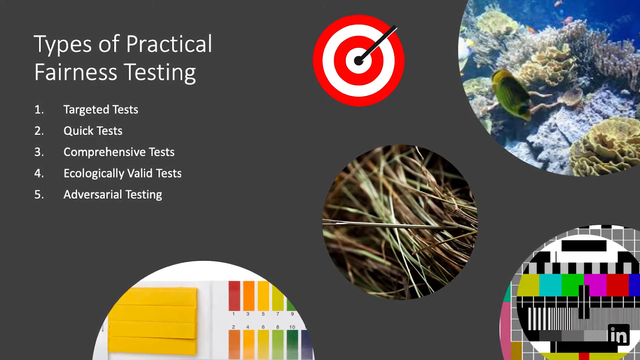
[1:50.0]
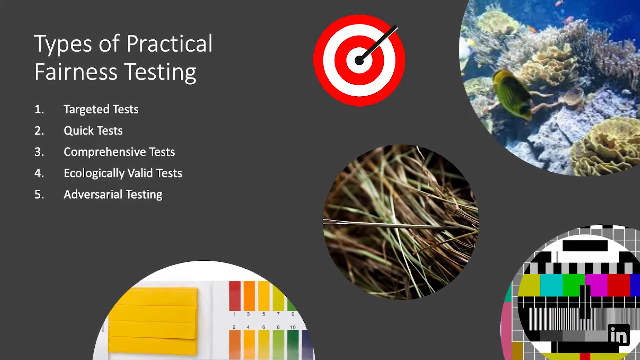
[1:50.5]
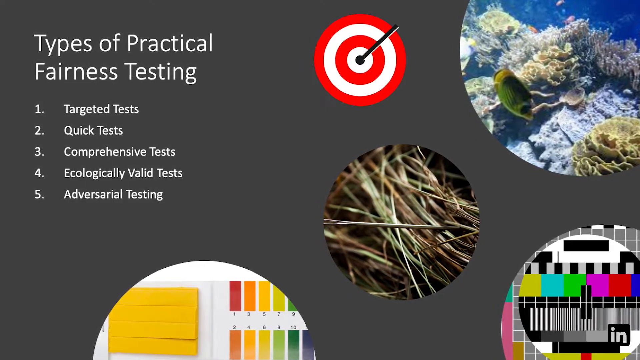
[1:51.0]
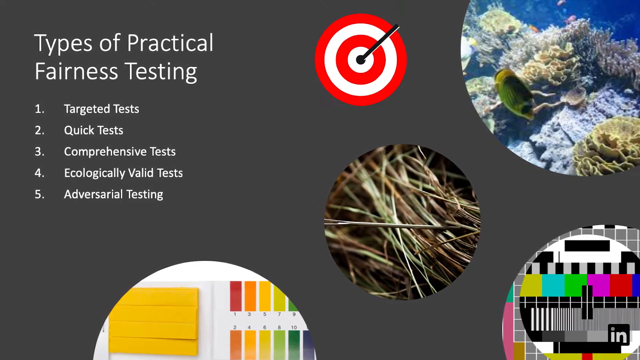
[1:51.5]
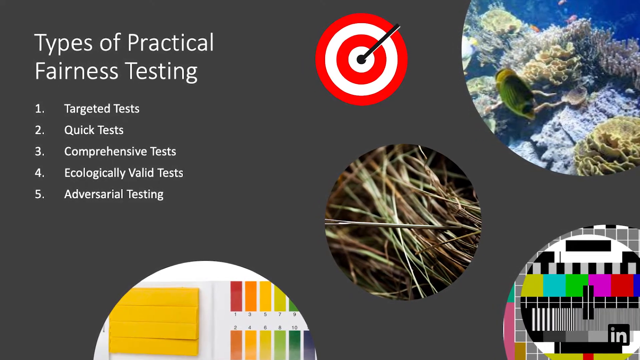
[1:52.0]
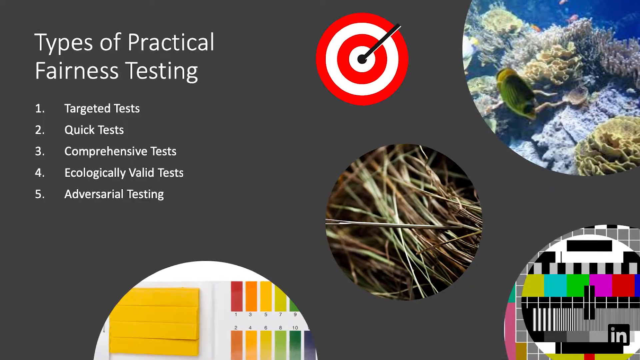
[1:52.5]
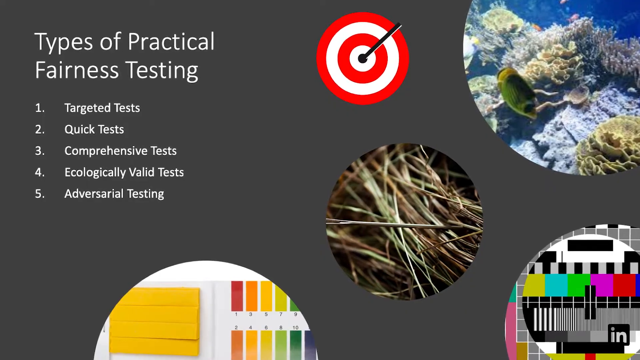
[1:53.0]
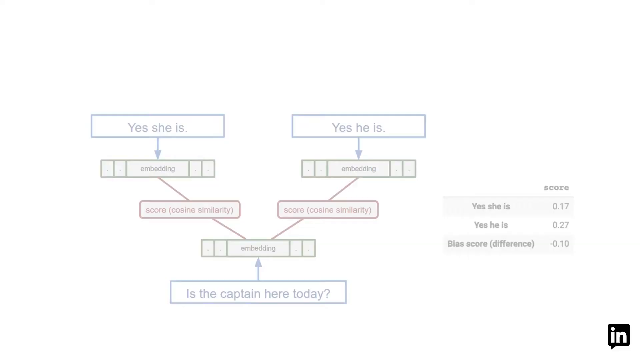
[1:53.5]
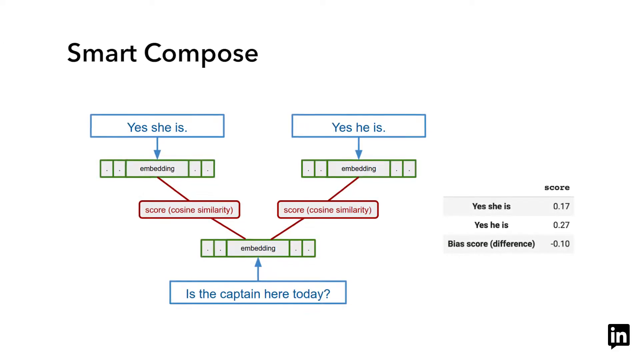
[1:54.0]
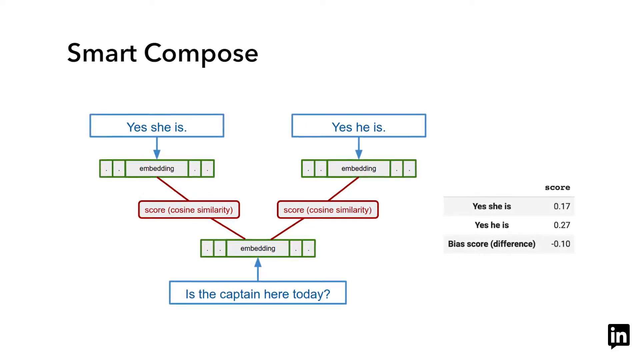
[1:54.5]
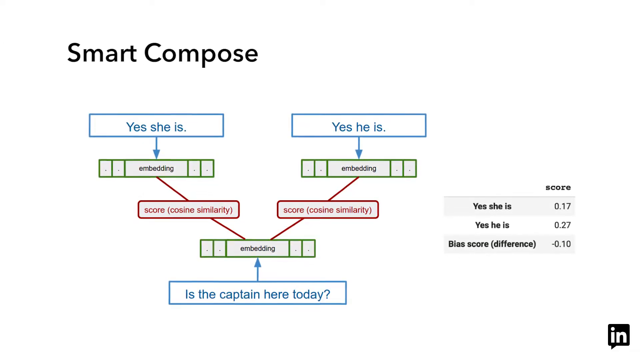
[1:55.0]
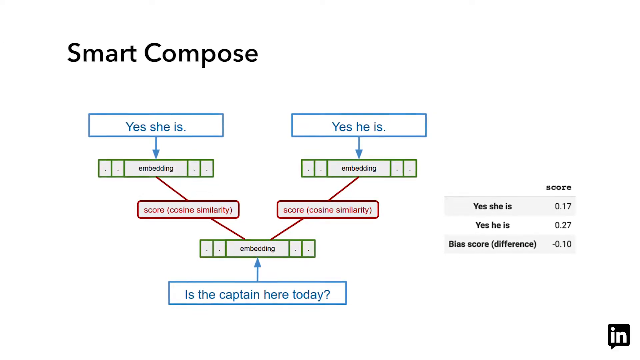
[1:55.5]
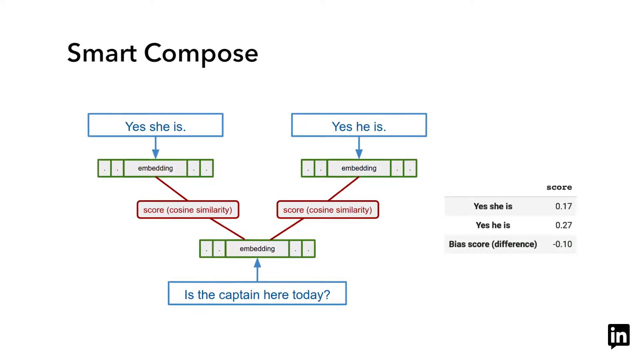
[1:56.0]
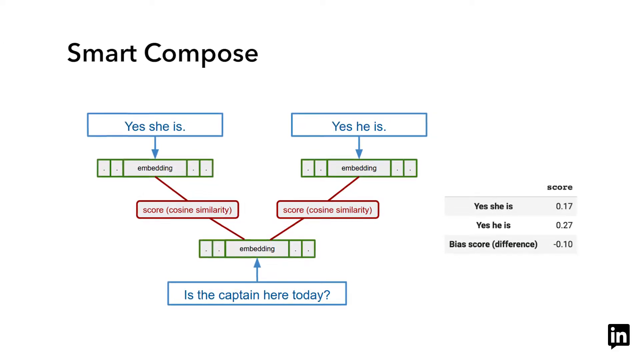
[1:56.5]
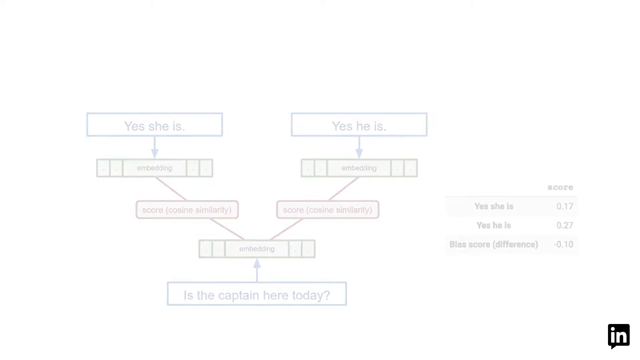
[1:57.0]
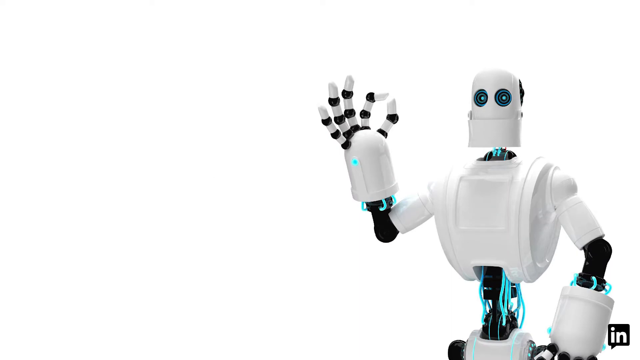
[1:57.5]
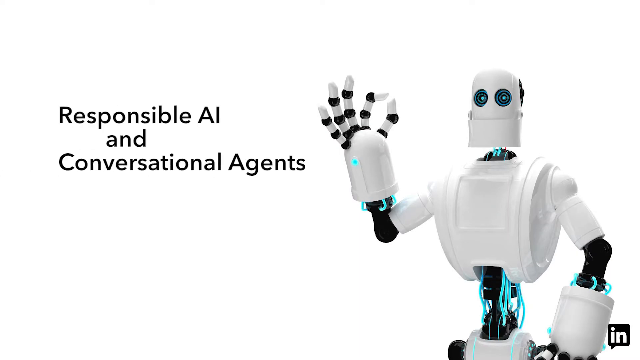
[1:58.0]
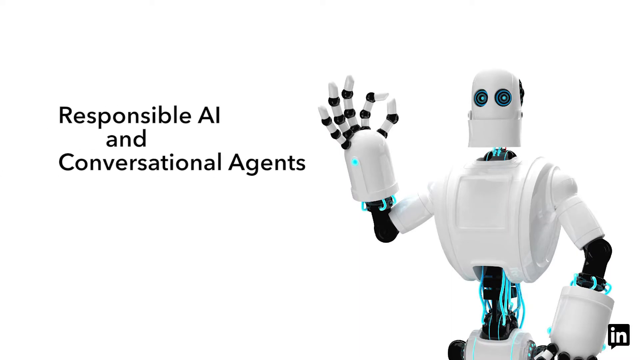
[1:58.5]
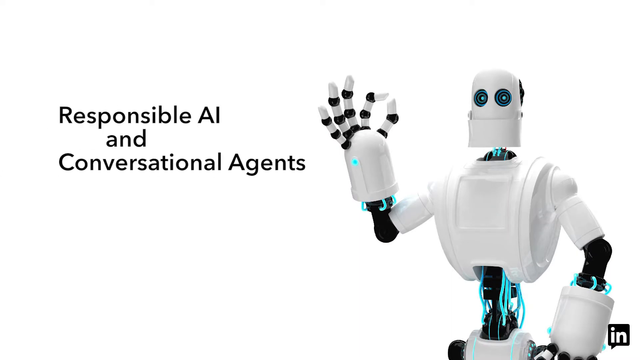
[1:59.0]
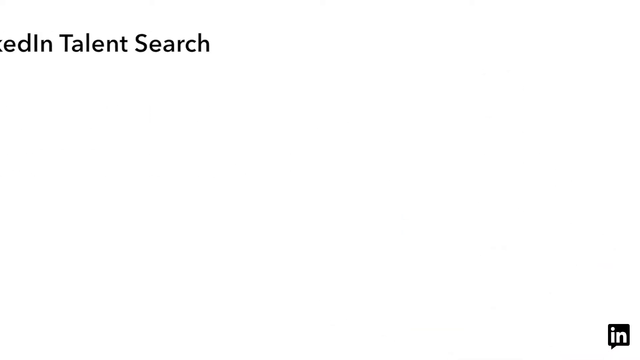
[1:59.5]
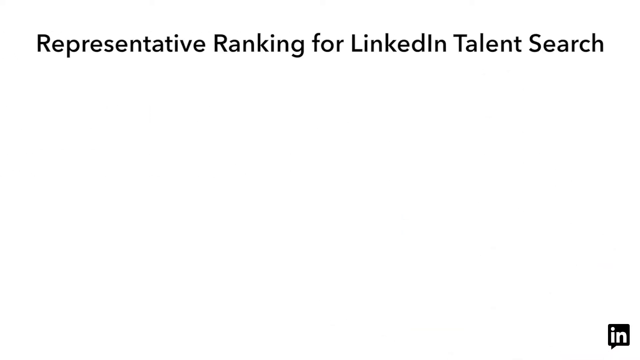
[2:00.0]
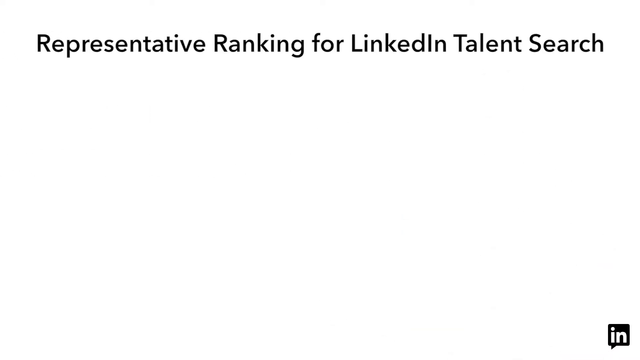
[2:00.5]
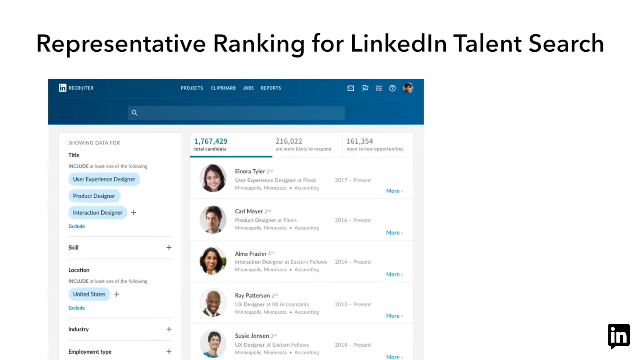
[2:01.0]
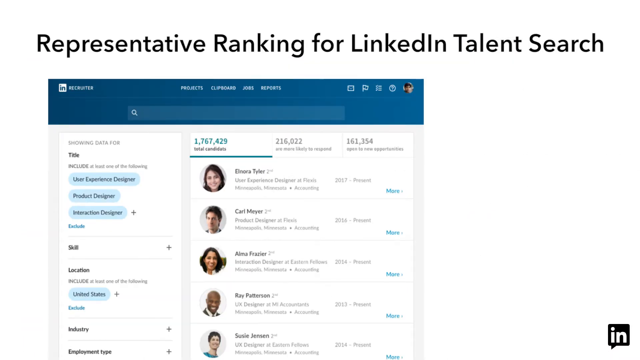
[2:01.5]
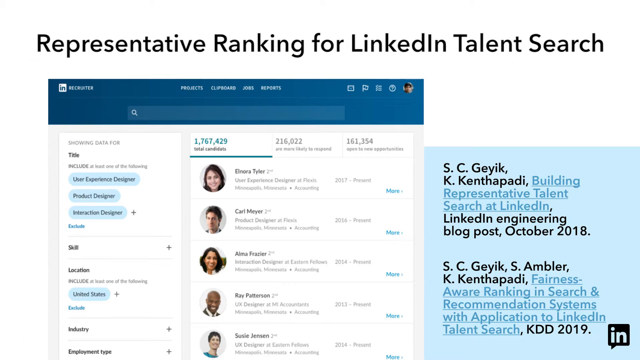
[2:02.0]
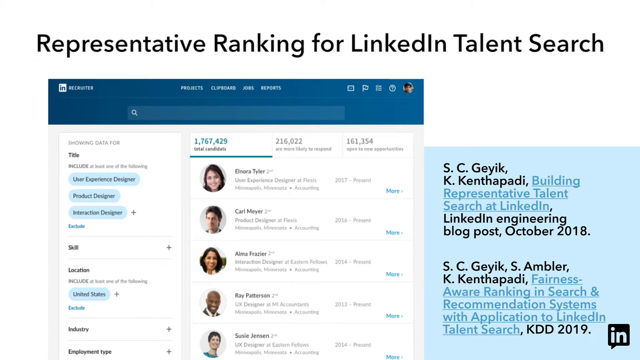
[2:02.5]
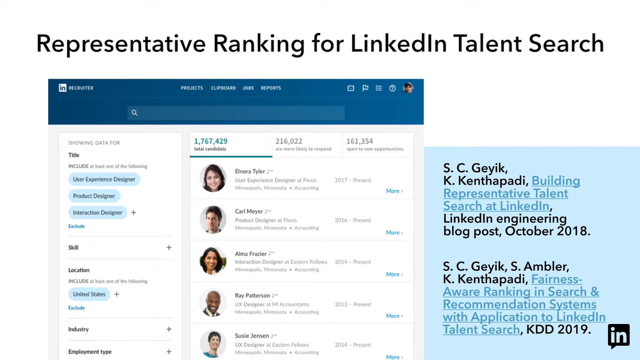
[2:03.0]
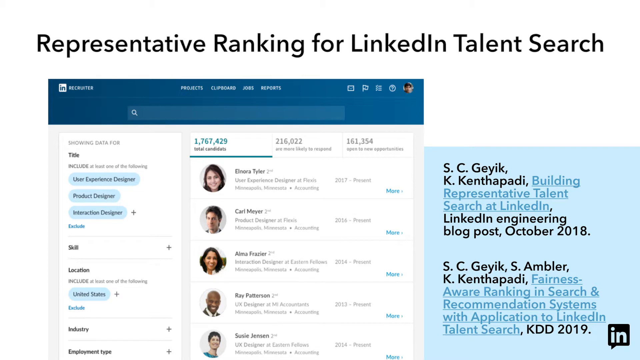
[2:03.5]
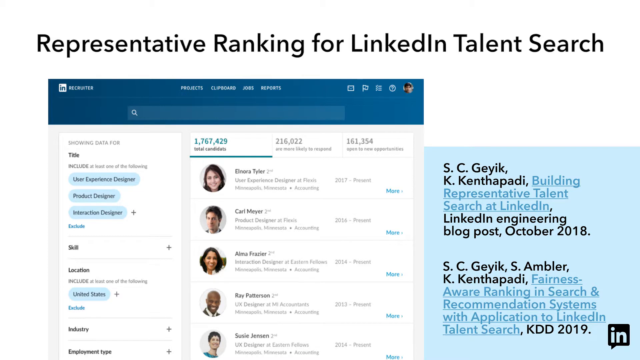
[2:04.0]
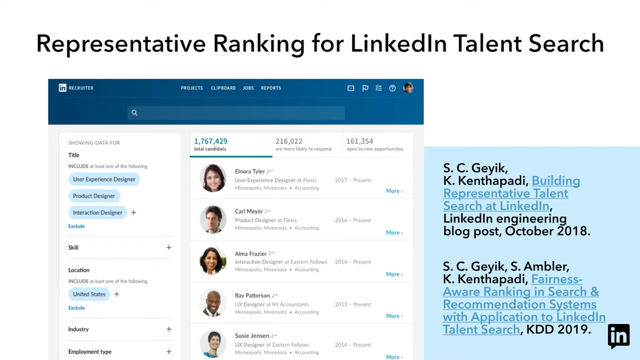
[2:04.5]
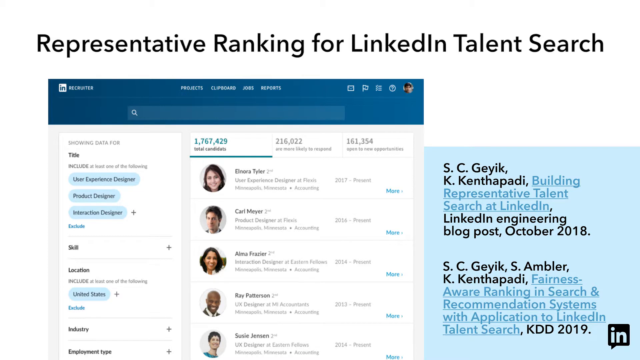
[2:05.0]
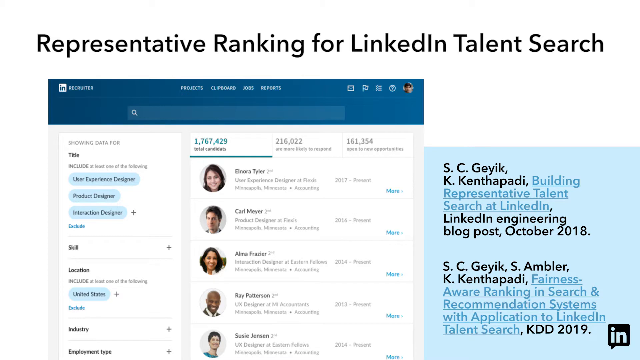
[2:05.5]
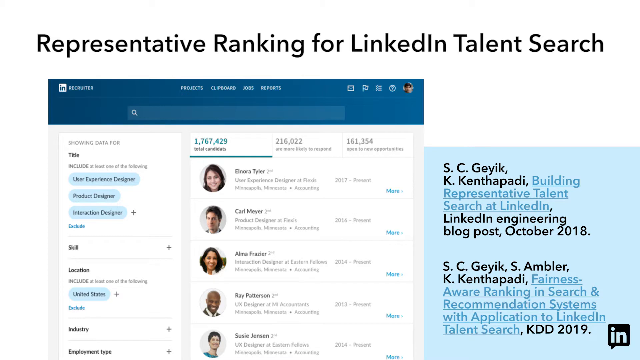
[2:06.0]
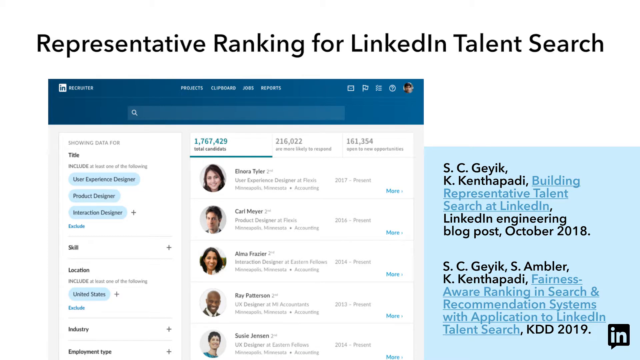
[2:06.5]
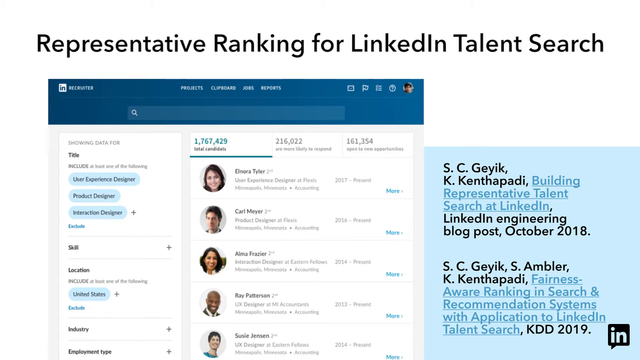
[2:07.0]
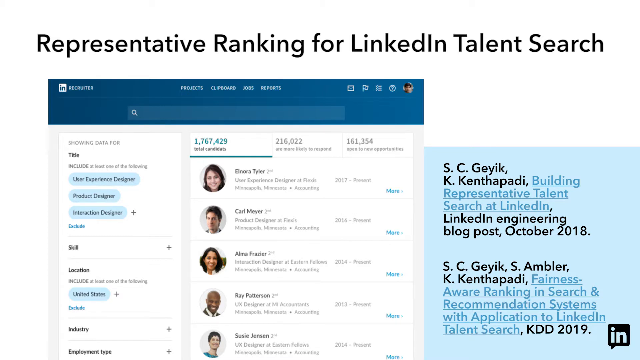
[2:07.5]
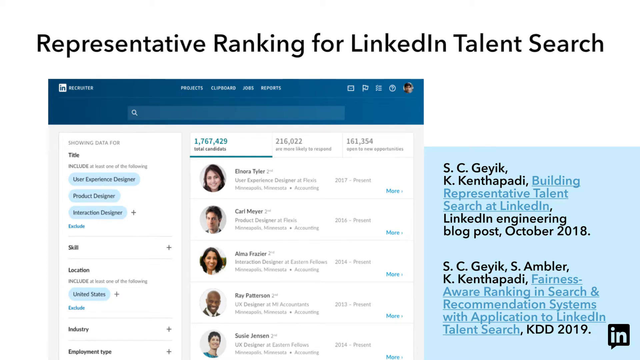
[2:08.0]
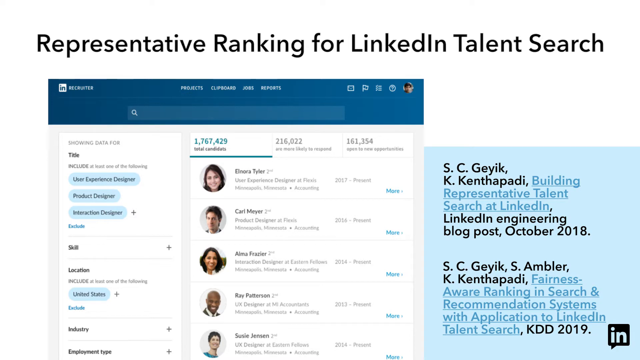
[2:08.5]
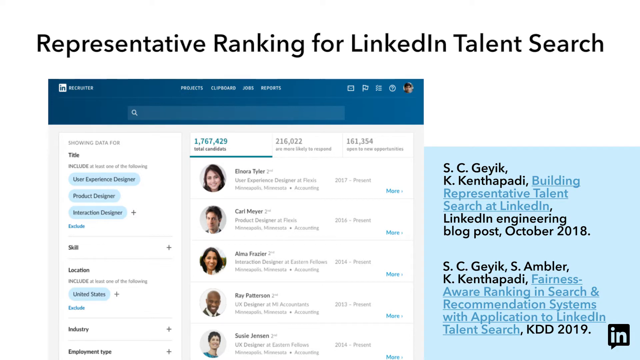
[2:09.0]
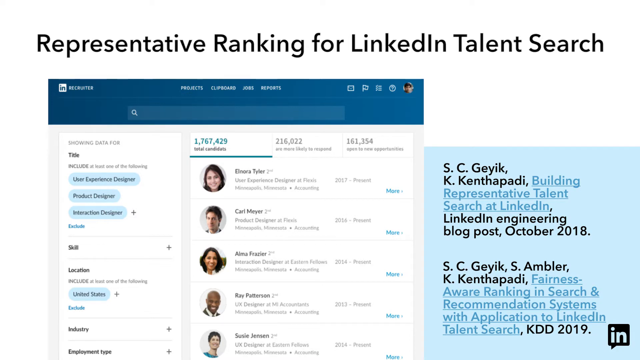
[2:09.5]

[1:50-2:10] A slide titled "smart compose" has a flow chart on the left side that starts with "yes, she is", goes down to "embedding", then to "score" in quotation marks, labeled "cosine similarity", and then to "embedding" again; at the bottom, an arrow labeled "is the captain here today?" points to that last embedding. On the top right, a similar chart runs from "yes, he is" down to "embedding", down to "score" in quotation marks with "cosine similarity", and back to "embedding". On the right side, a box lists "yes, she is", "yes, he is" and "bias score / difference", with a score for each: 0.174 for "yes, she is", 0.274 for "yes, he is", and -0.10 for the bias score. The presentation then transitions to a slide reading "representative ranking for linkedin talent search" with a screenshot from the LinkedIn website showing a group of what are probably people applying for jobs or LinkedIn talent, possibly with options to filter candidates, keywords or skills.